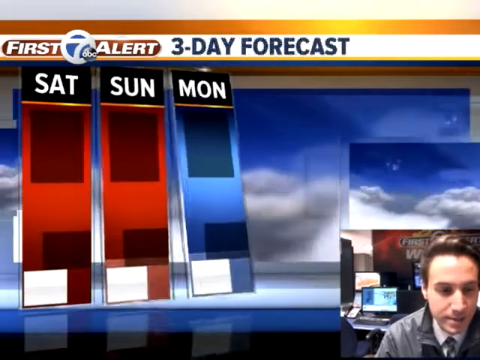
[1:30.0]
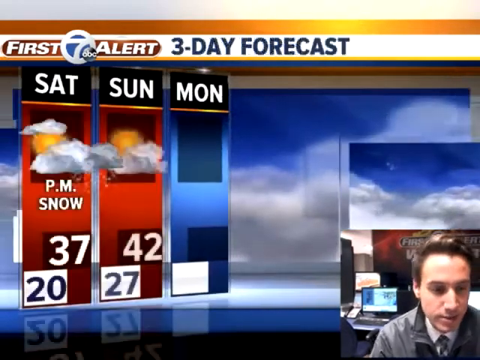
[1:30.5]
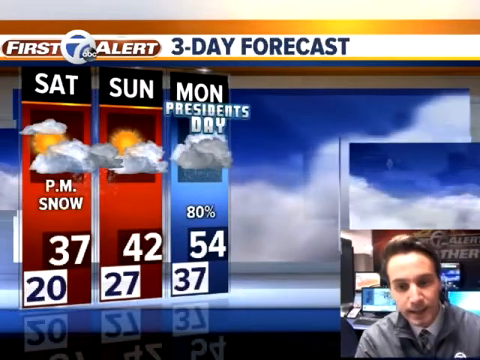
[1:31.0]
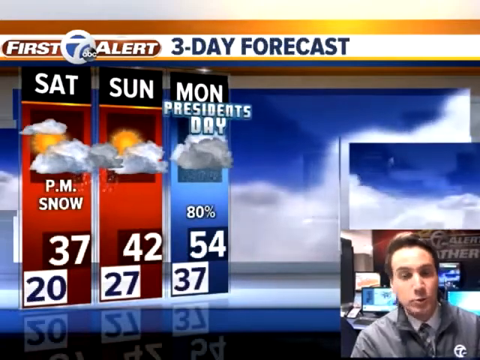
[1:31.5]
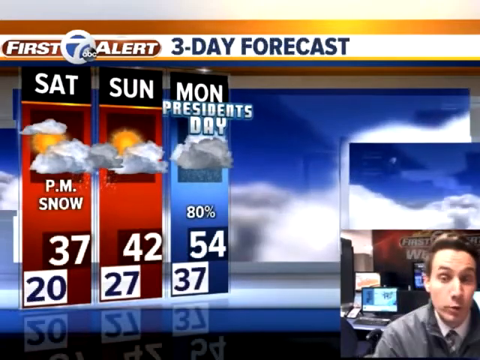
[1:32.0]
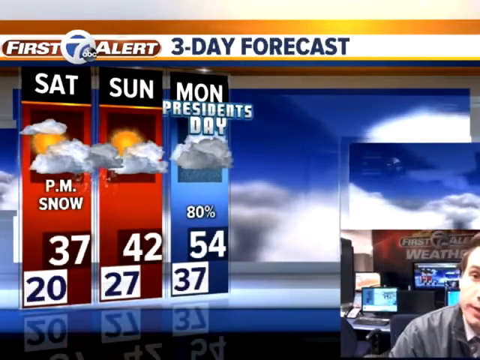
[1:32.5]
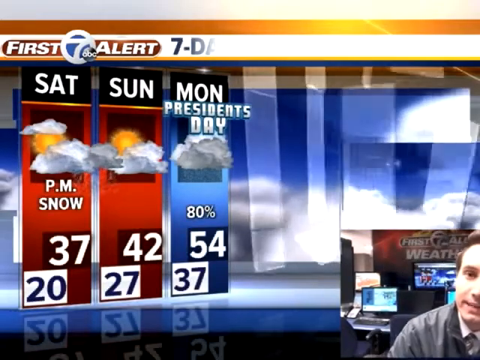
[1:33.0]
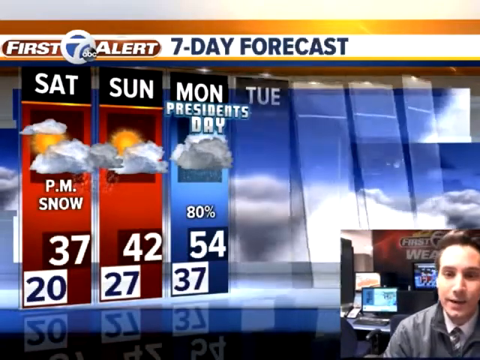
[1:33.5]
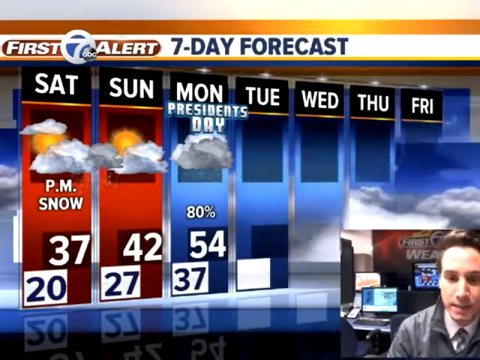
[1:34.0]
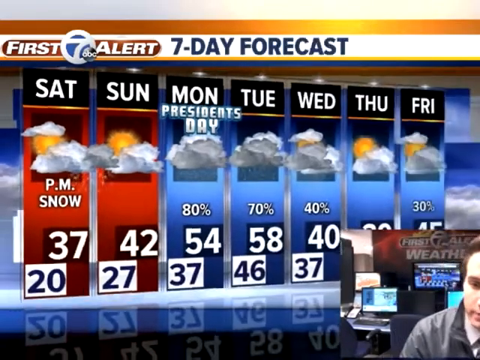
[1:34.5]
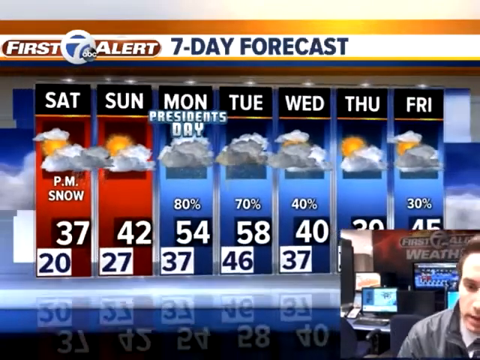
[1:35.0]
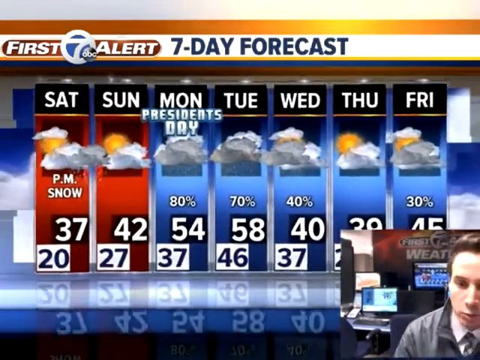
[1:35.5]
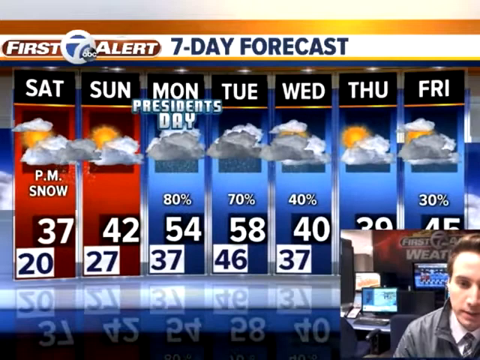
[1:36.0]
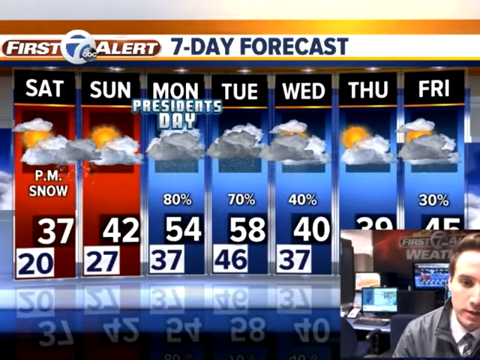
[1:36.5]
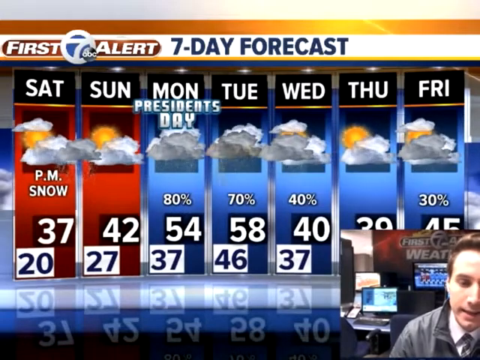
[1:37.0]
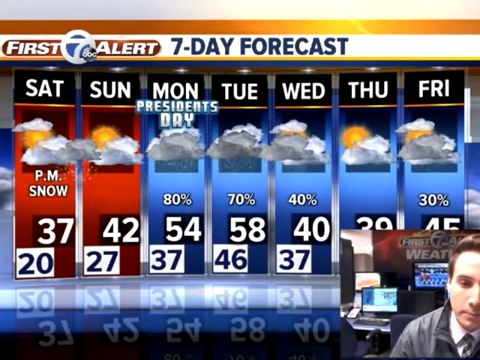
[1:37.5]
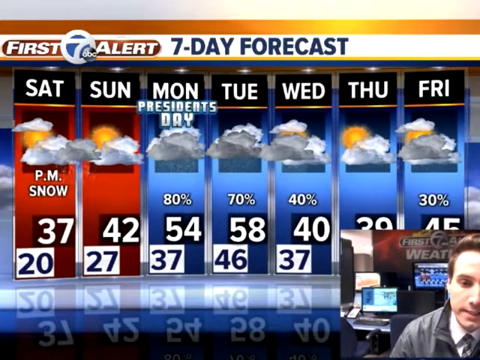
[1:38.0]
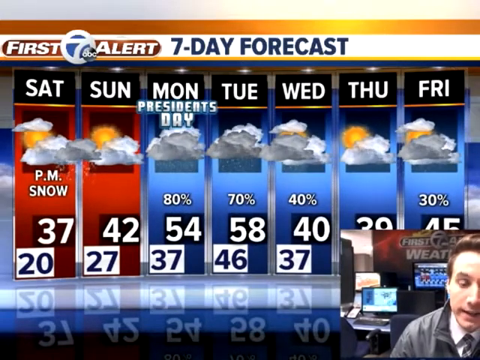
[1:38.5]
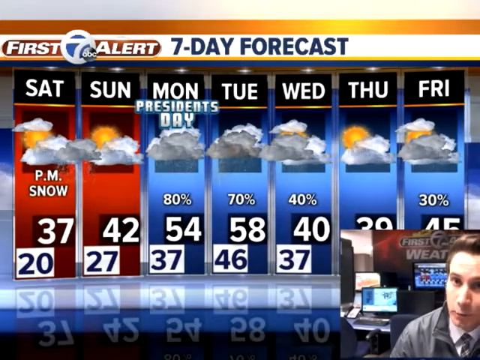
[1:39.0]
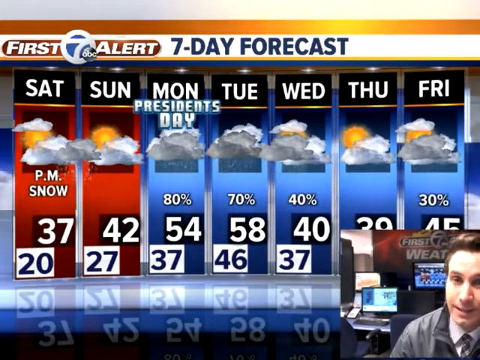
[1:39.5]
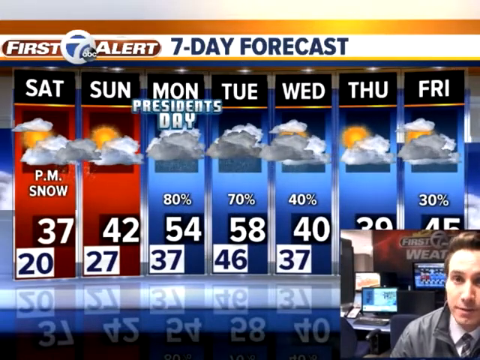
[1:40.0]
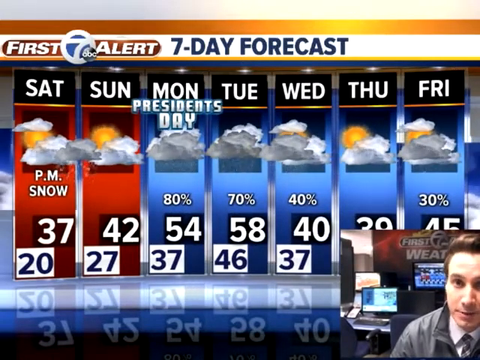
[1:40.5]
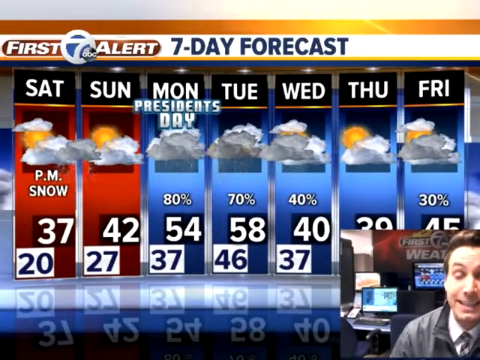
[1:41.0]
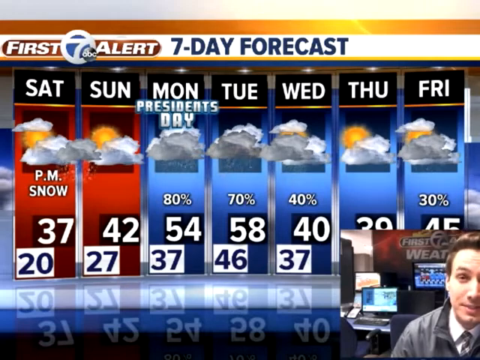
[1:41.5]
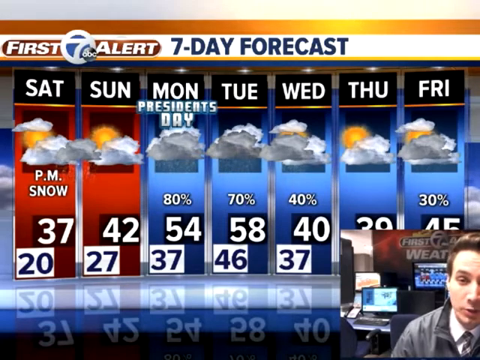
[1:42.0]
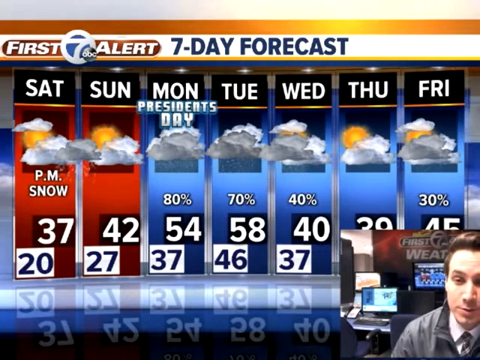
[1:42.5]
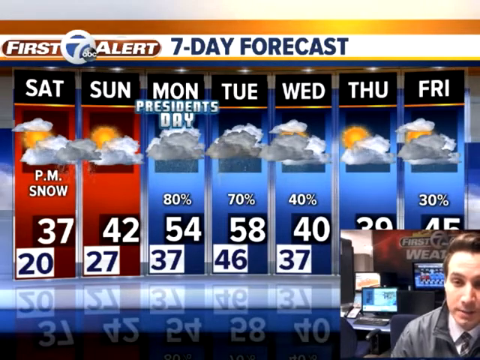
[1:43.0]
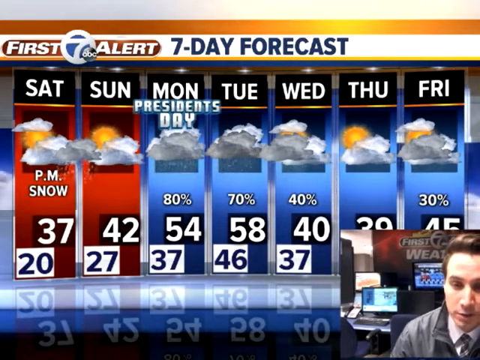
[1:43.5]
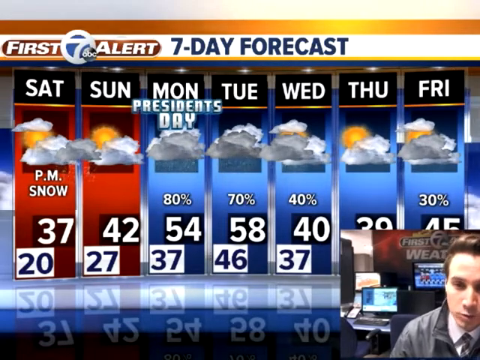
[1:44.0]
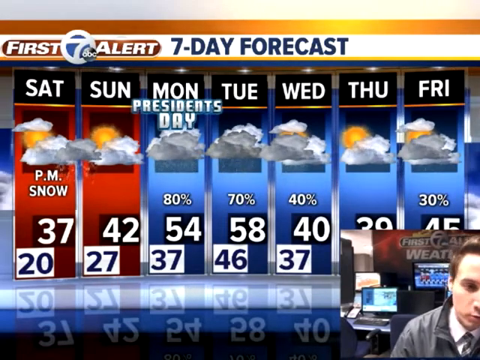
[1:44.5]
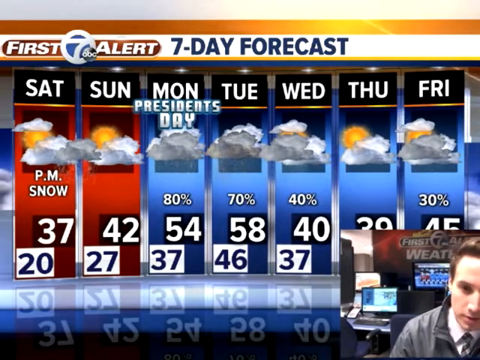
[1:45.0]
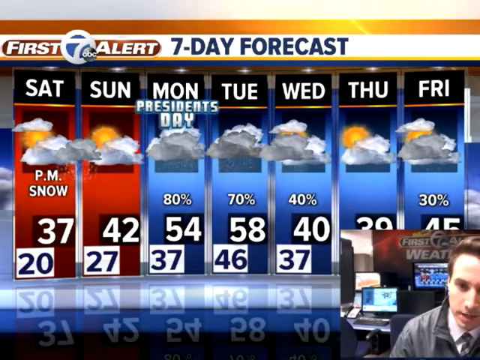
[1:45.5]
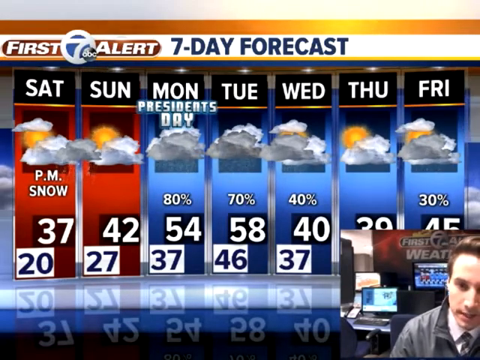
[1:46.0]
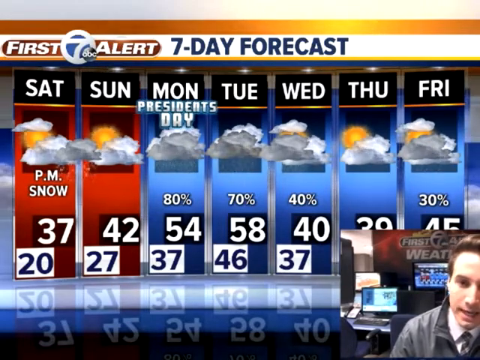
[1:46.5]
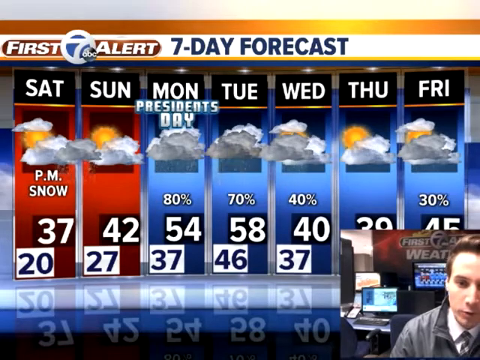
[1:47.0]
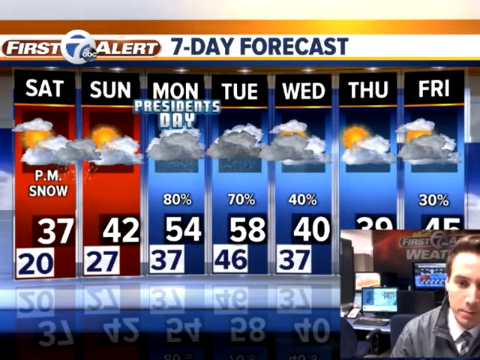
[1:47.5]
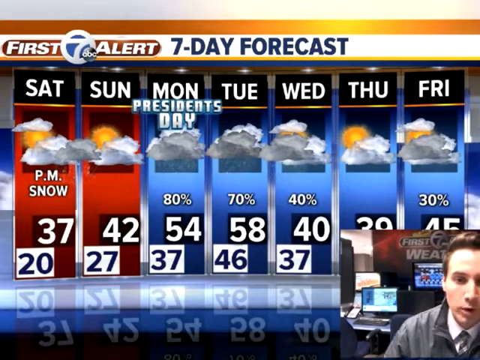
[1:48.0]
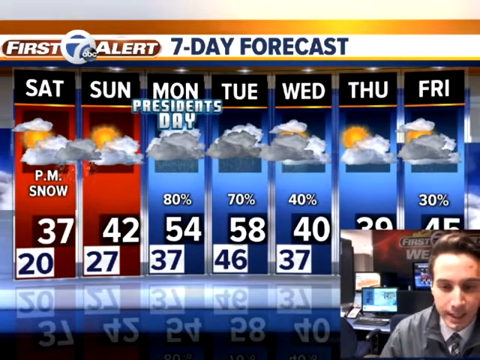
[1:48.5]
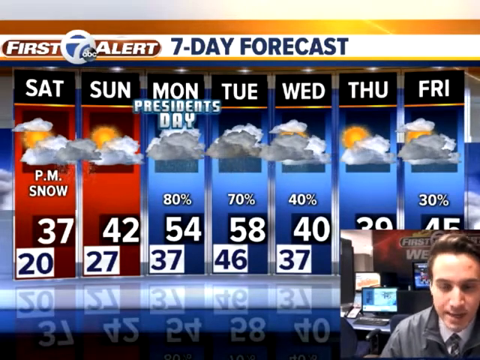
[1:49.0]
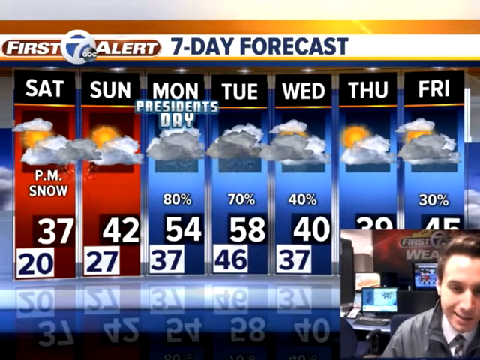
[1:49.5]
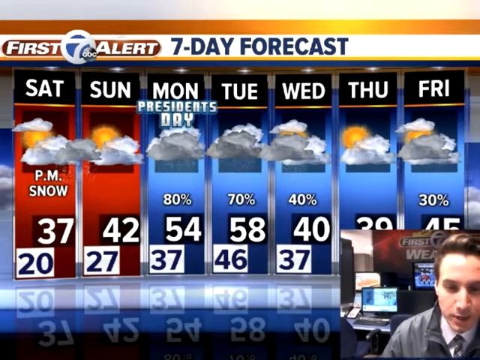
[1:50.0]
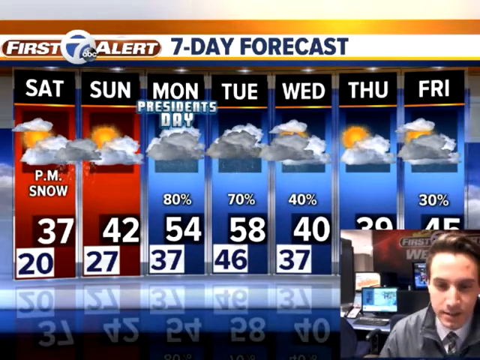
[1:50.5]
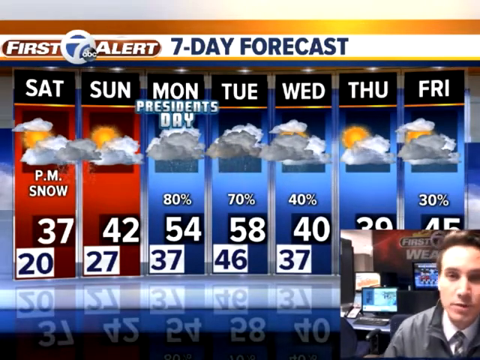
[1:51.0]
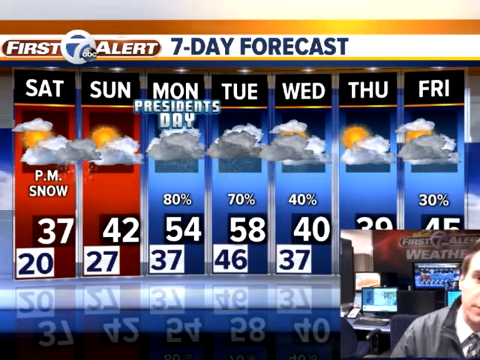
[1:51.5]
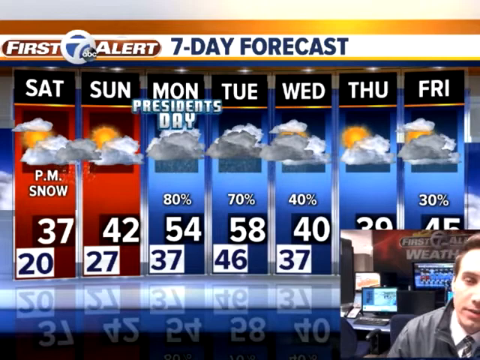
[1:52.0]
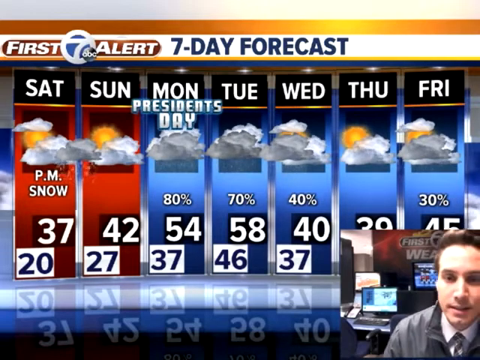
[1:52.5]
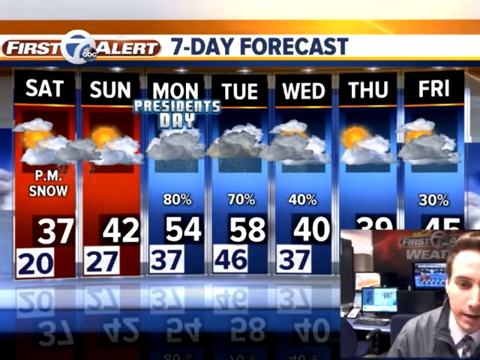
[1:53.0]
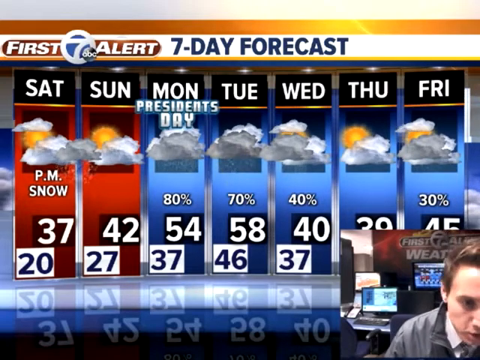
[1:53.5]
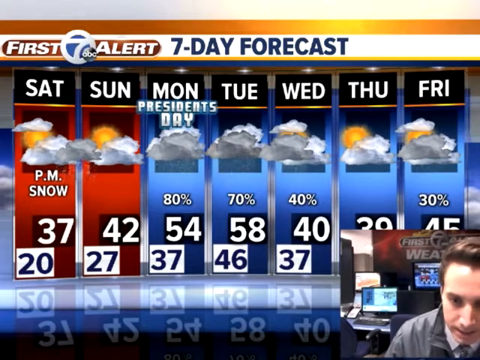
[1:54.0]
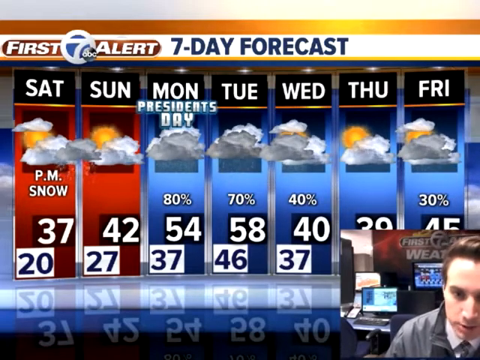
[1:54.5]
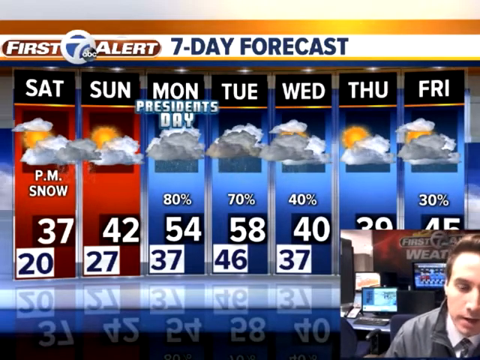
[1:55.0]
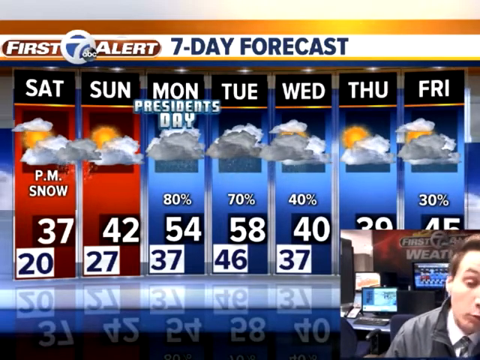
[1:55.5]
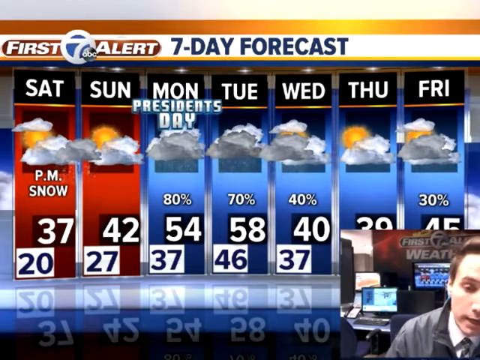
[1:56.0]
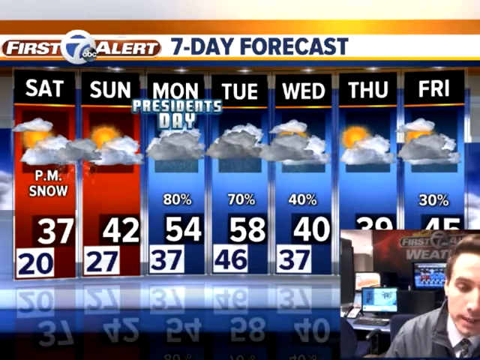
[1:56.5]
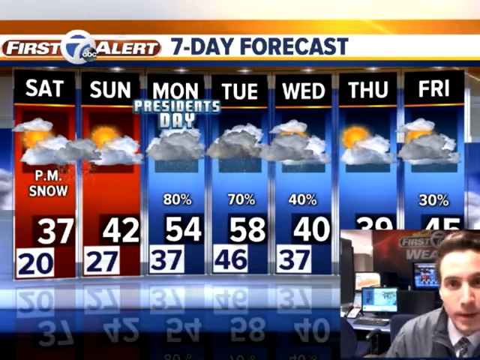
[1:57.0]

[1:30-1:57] A seven-day forecast is shown, starting with today, Sunday. Tuesday shows 70%, 58 and 46, Thursday shows 39, and Friday shows 30% and 45 on the screen. Washington, D.C. and Halifax appear, and Chicago, Detroit and Toronto are on the screen. The man is reporting the weather, with Monday through Sunday visible, and Atlanta, Washington, New York and Detroit are shown on the screen.